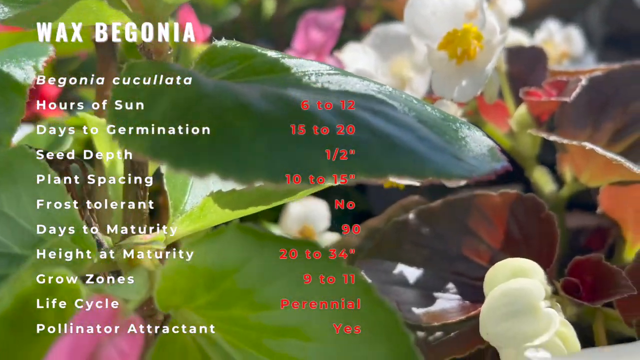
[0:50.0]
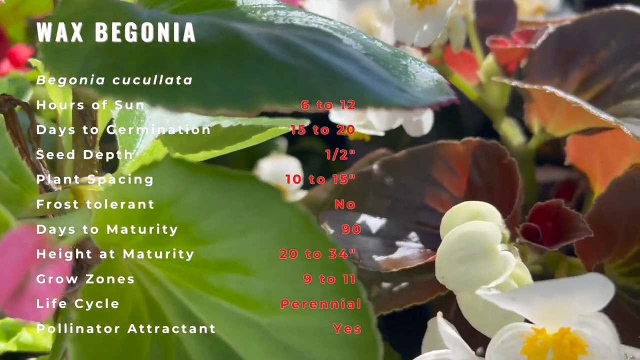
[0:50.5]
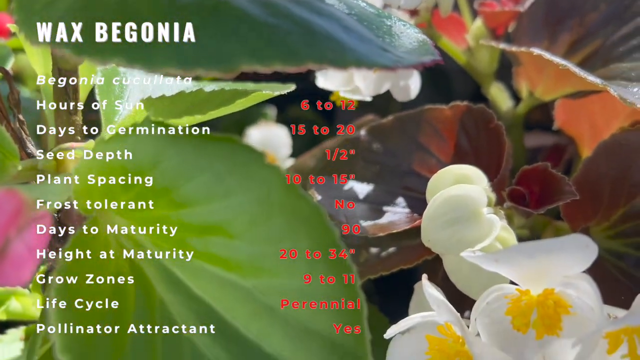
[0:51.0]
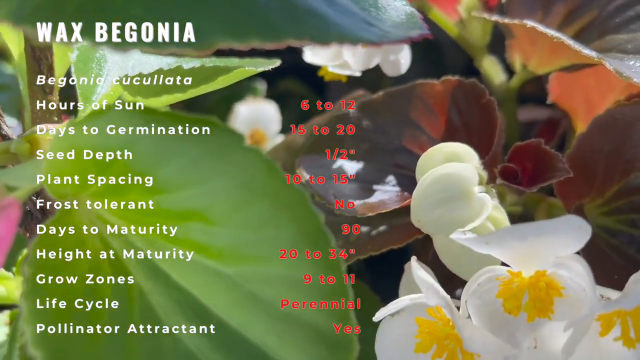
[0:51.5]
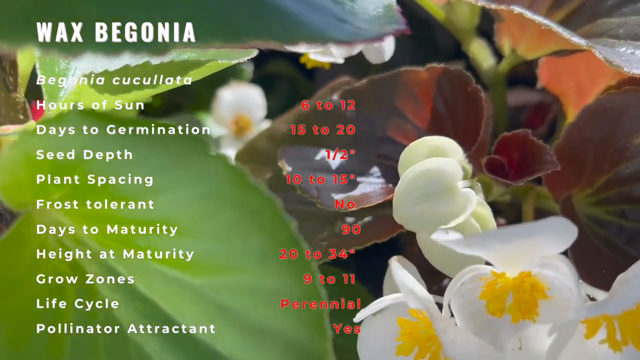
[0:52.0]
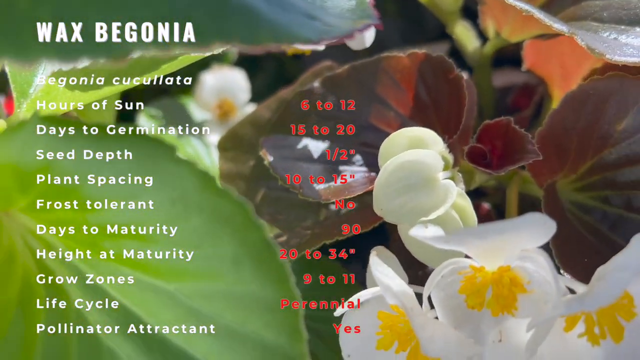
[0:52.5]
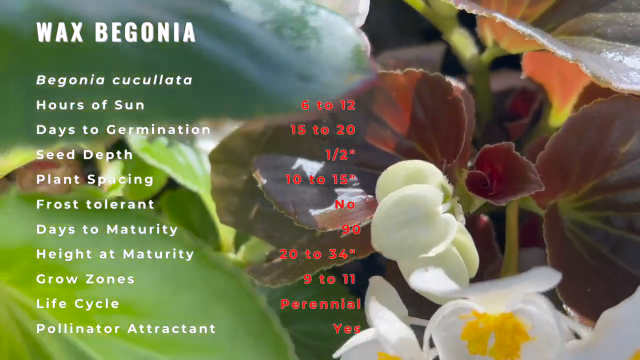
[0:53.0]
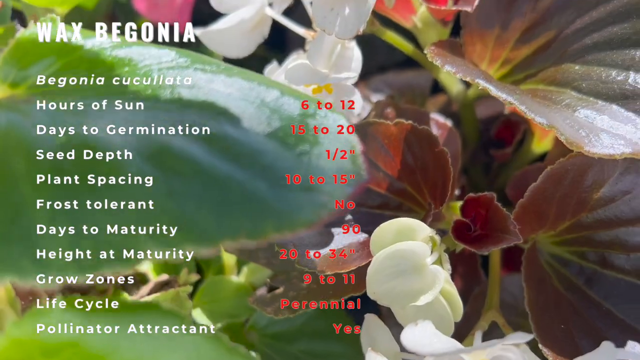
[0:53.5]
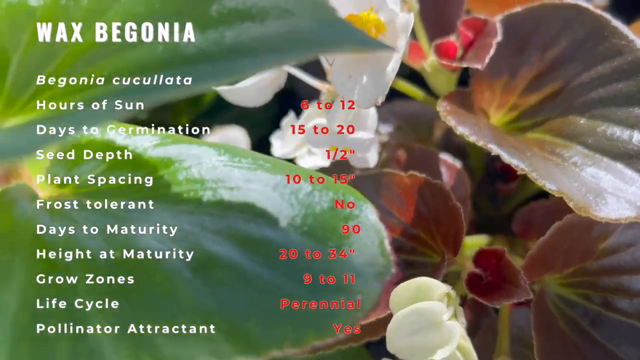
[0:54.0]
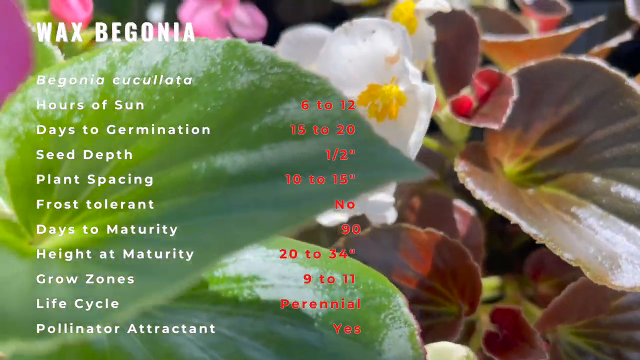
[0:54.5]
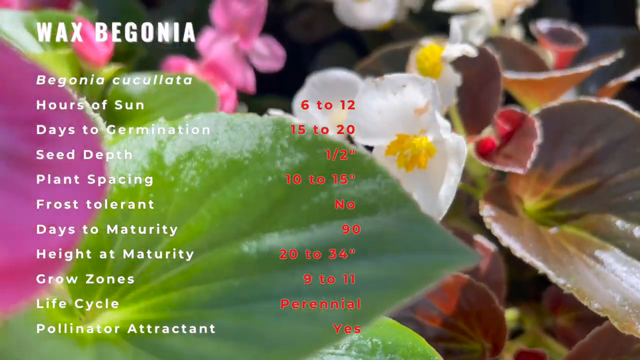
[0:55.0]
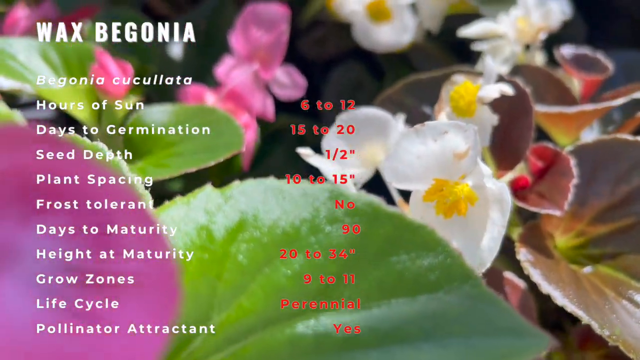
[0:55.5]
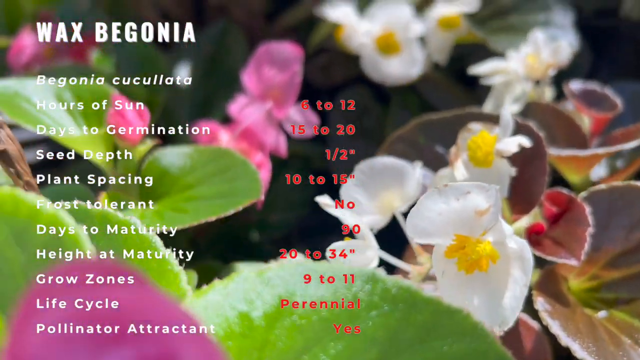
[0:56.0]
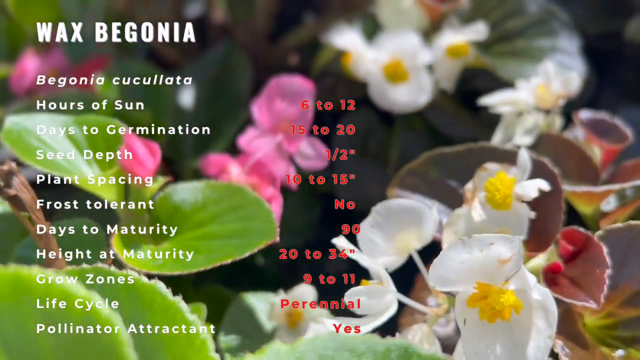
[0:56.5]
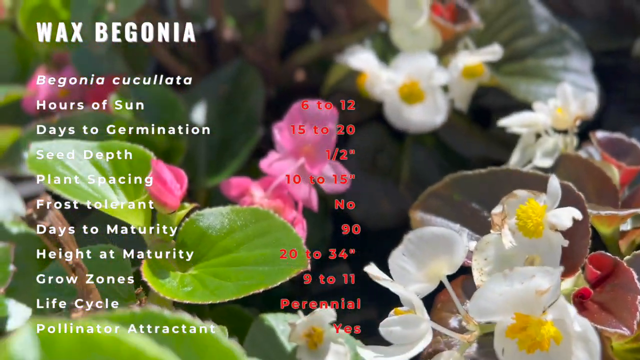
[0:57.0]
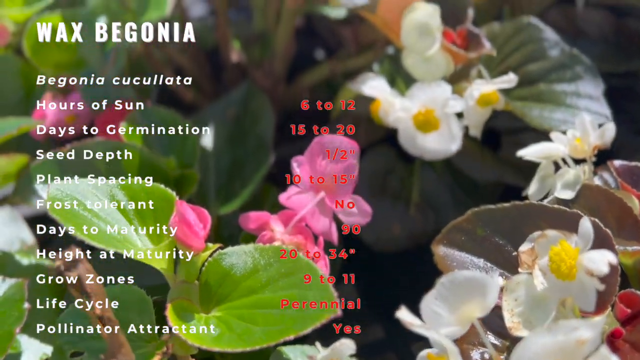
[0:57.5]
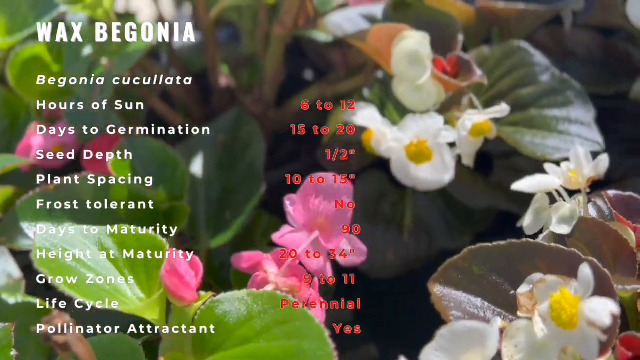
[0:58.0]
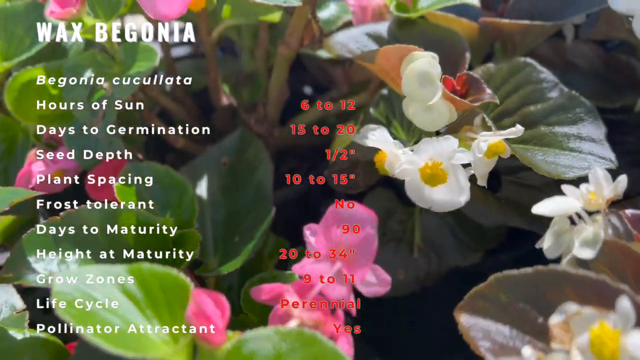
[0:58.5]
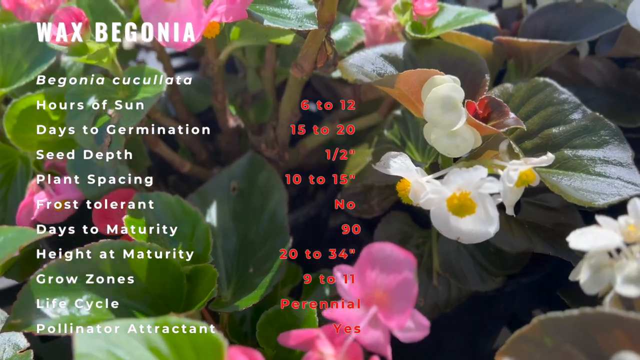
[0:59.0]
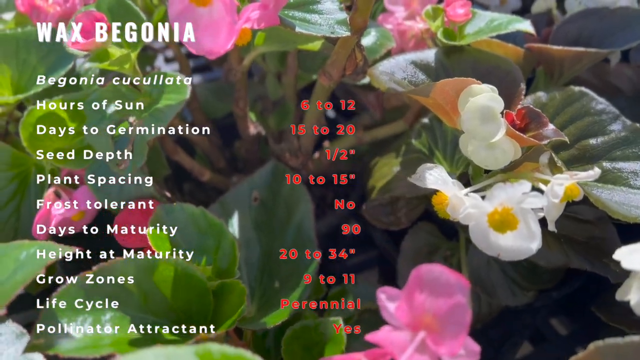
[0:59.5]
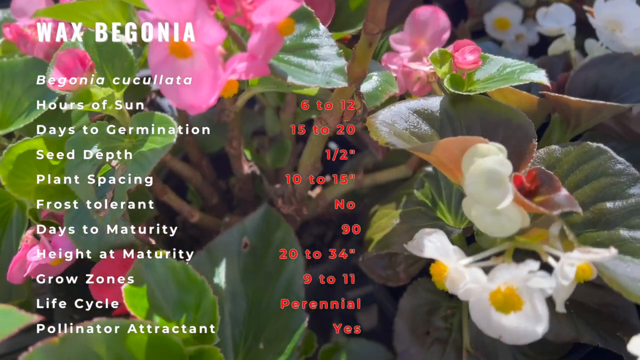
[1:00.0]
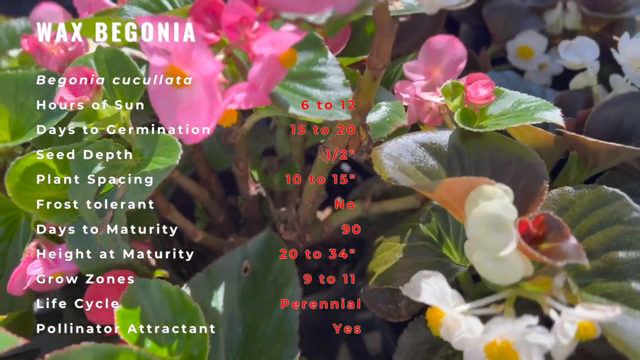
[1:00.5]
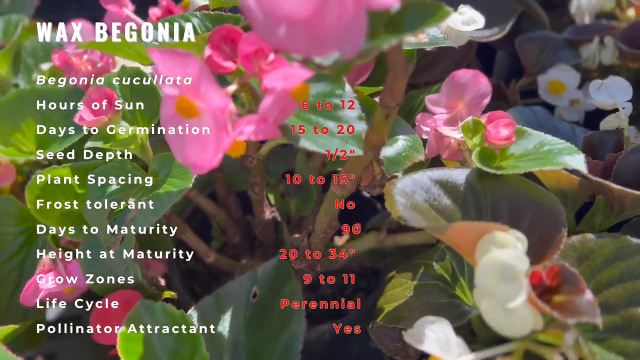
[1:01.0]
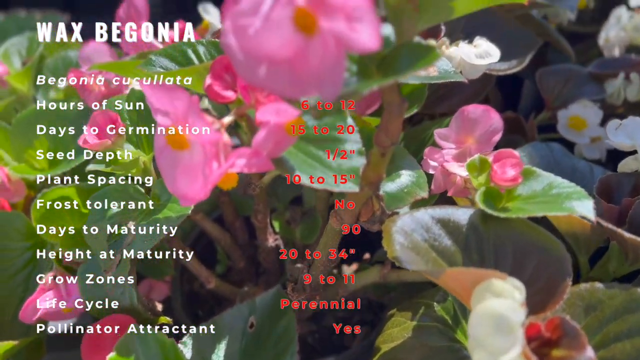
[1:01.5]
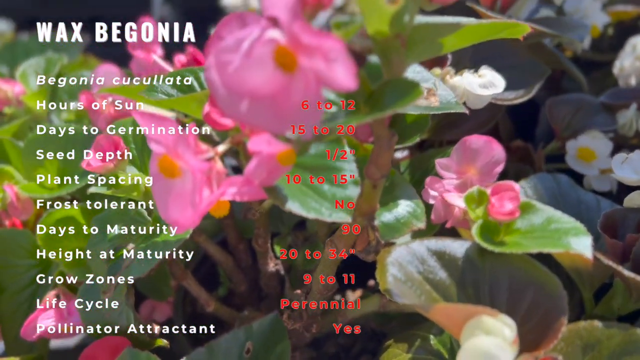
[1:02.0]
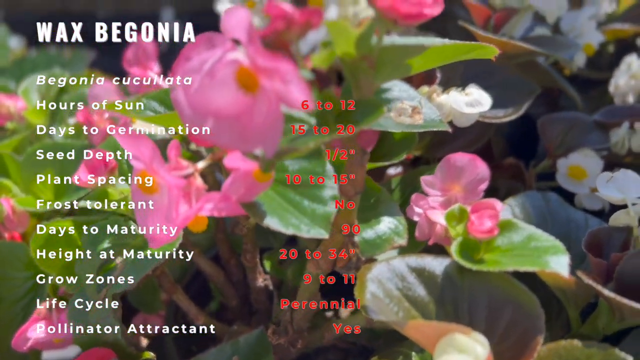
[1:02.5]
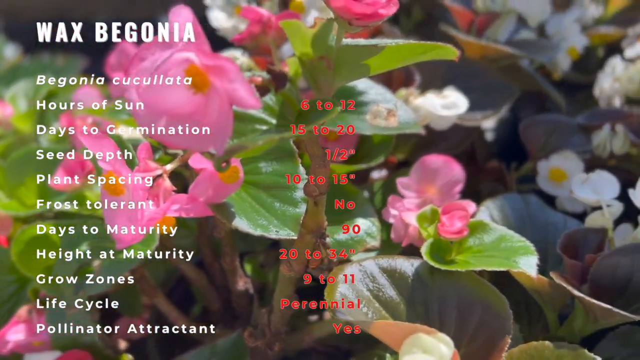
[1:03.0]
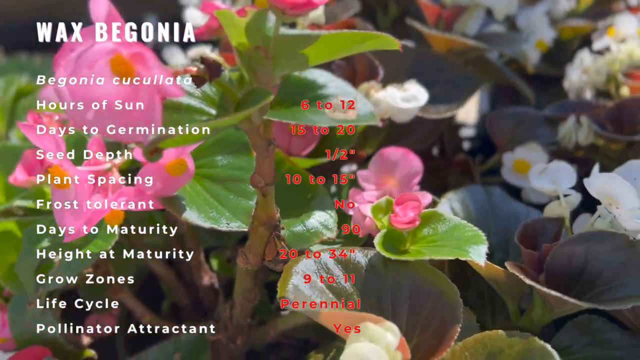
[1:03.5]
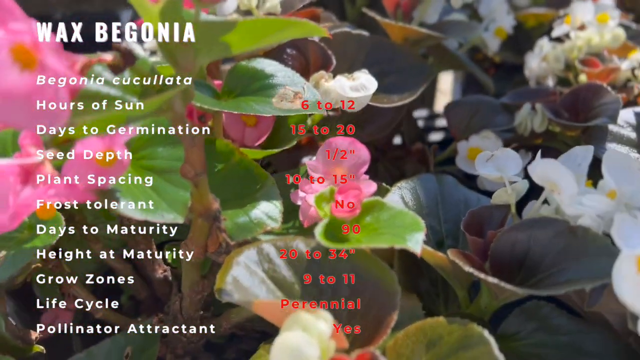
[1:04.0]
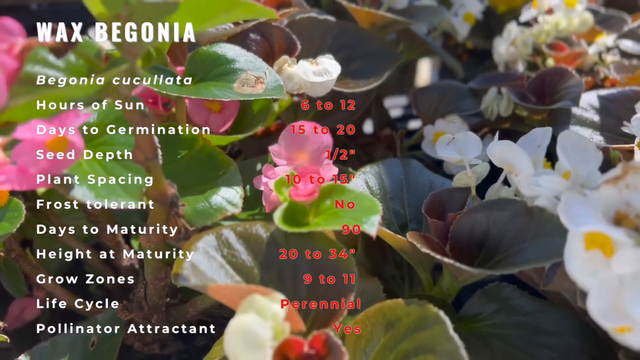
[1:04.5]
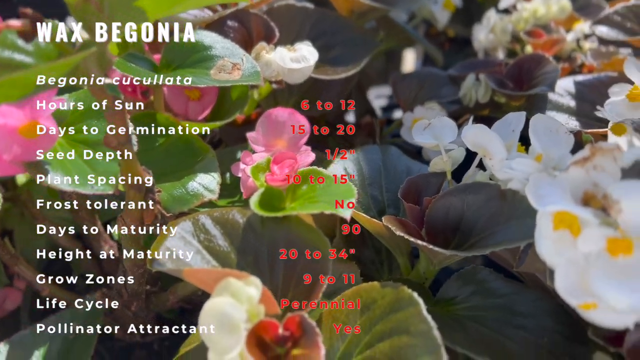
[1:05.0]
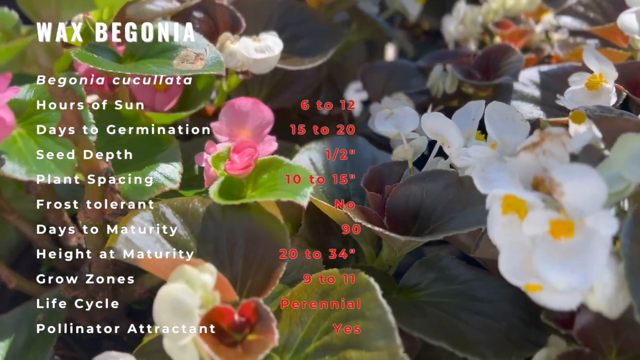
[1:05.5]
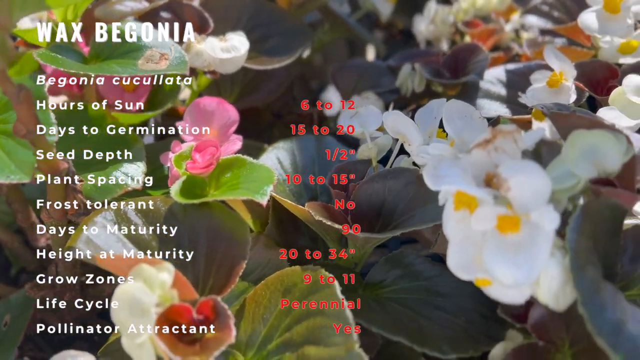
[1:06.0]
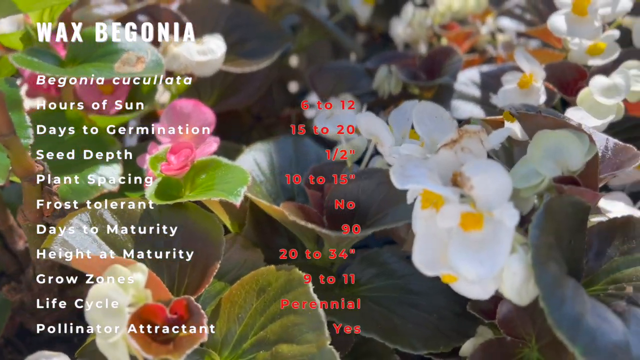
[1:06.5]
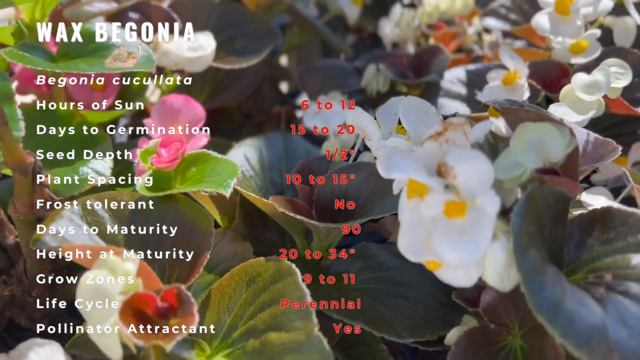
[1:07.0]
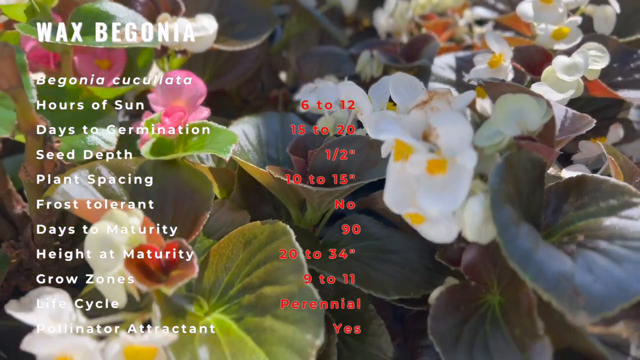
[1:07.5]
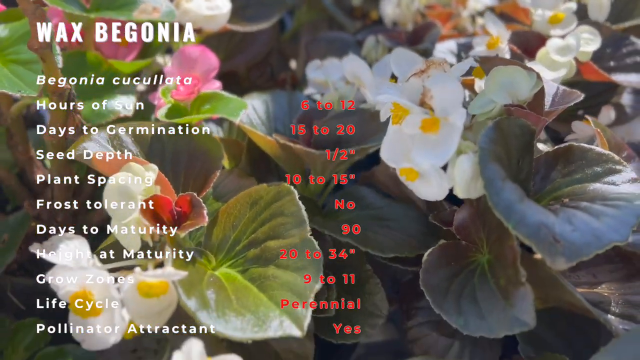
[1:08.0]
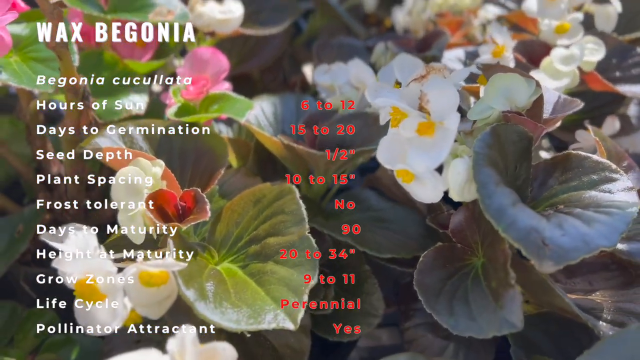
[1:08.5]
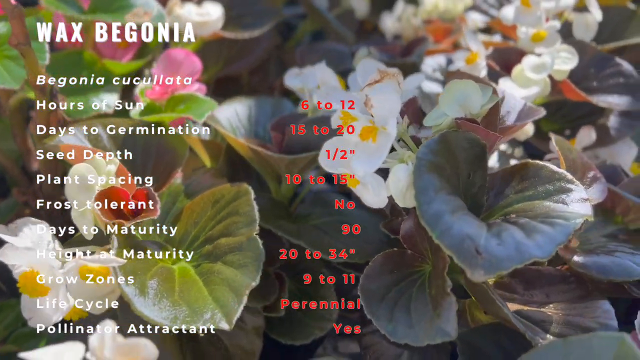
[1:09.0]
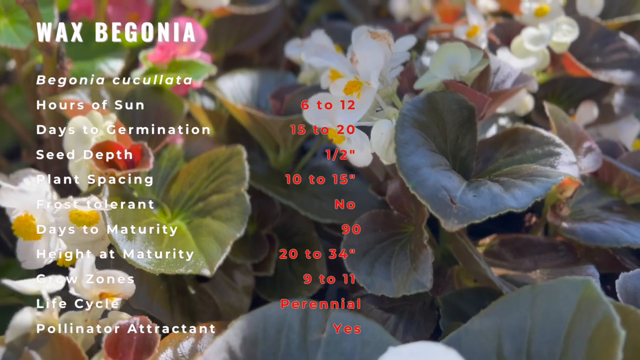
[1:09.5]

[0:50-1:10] Outdoors in bright sunlight, the view is zoomed in on flowers: little pink flowers with yellow stamens and white flowers that look like the same kind of flower, also with little stamens. The camera pans around the flowers. White text is on the left and red text on the right, the red text being very hard to read. The text reads "wax begonia, begonia cuculata, hours of sun, six to 12 days to germination, 15 to 20 seed depth, 12 inches plant spacing, 10 to 14," the last number apparently 14, followed by "Frost tolerant, no. Days to maturity, 90. Height at maturity, 20 to 34 inches. Growth zones, nine to 11. Life cycle perennial."